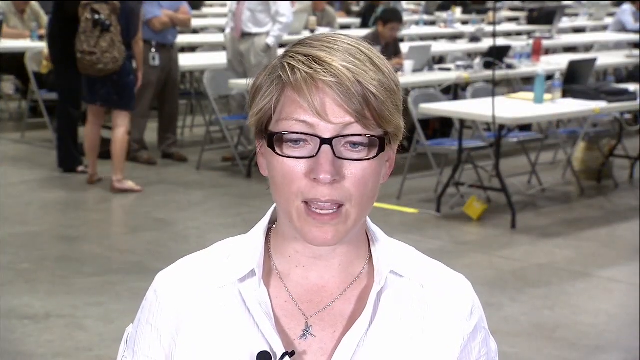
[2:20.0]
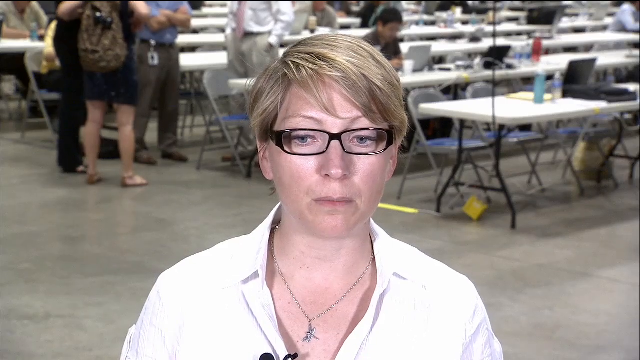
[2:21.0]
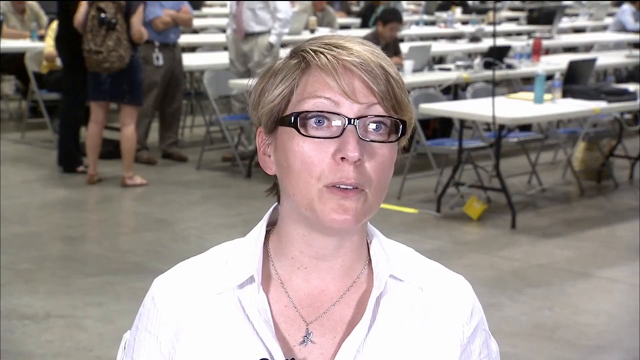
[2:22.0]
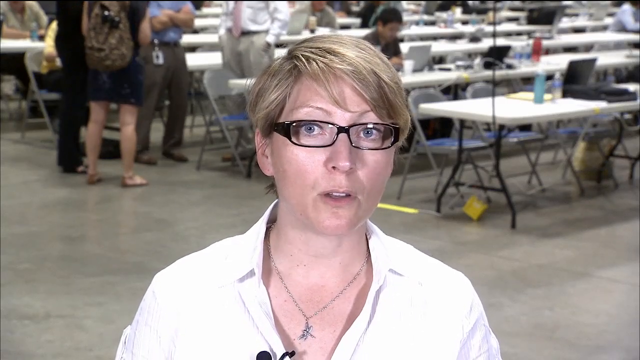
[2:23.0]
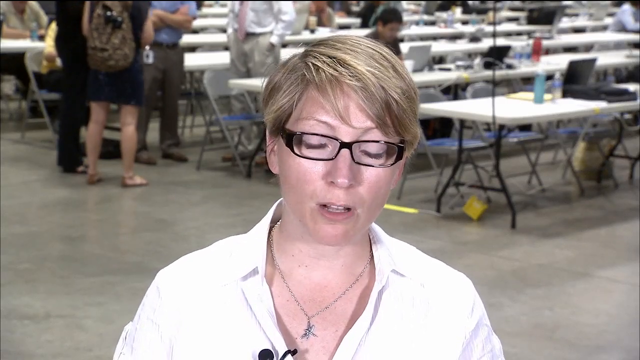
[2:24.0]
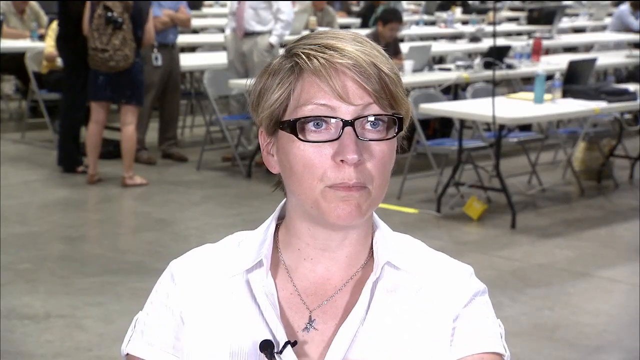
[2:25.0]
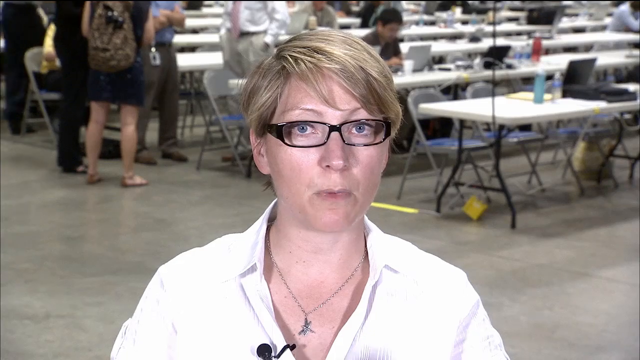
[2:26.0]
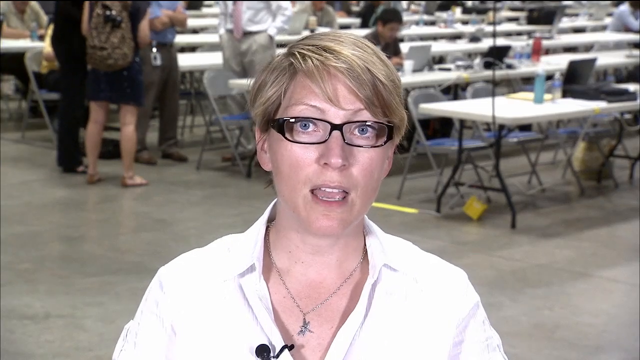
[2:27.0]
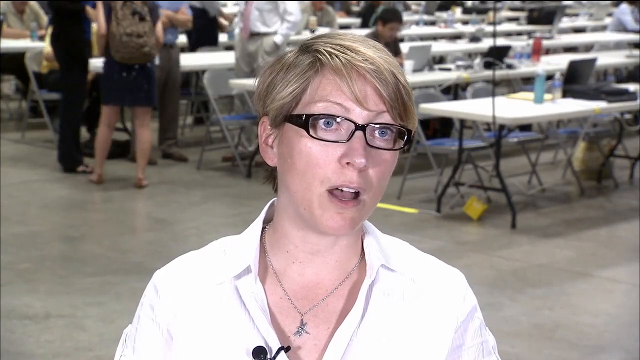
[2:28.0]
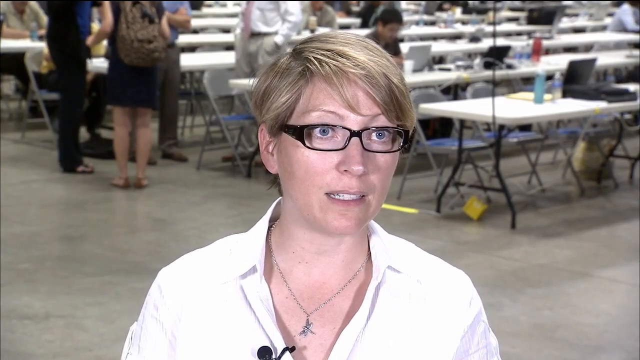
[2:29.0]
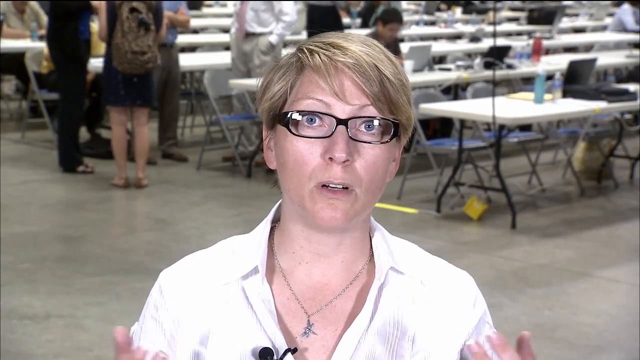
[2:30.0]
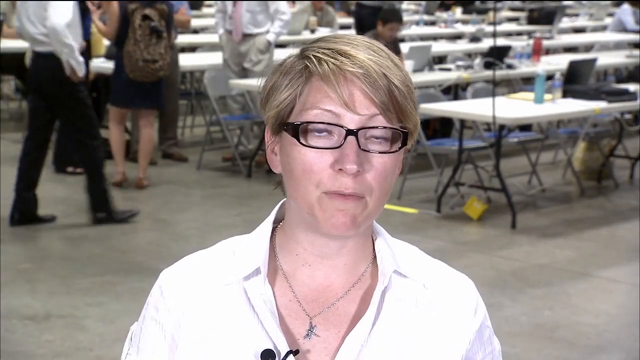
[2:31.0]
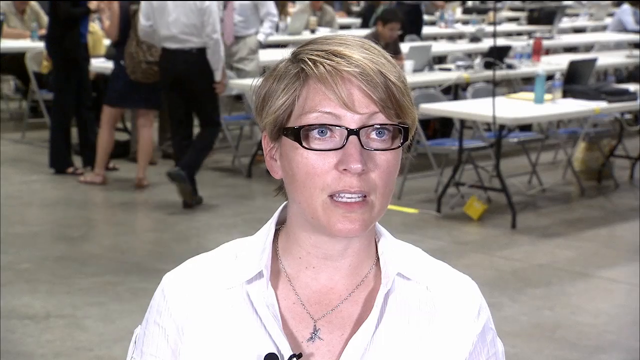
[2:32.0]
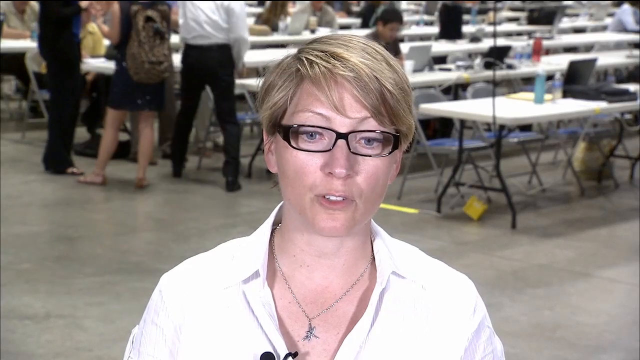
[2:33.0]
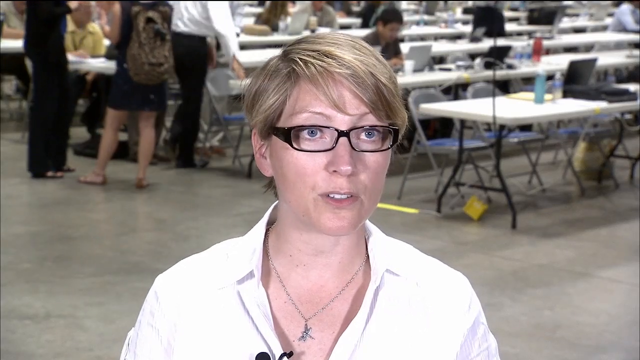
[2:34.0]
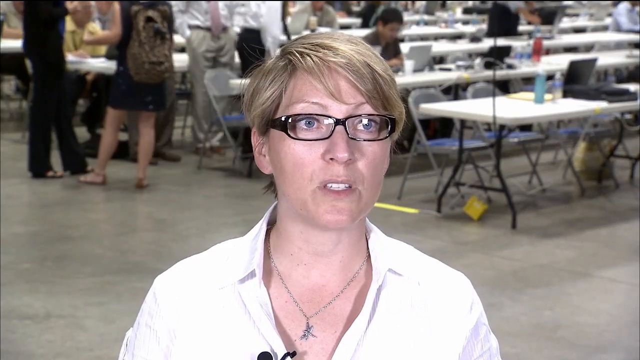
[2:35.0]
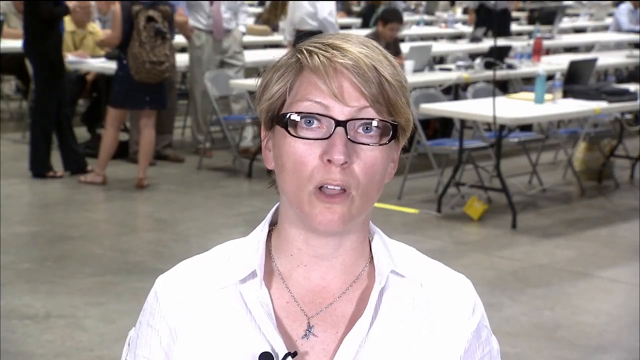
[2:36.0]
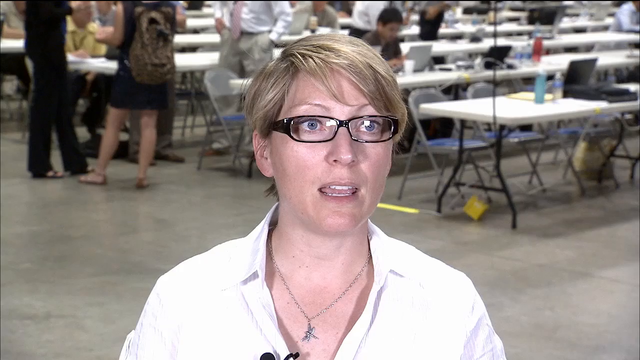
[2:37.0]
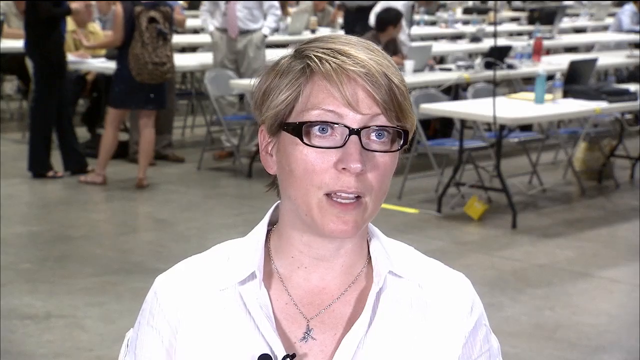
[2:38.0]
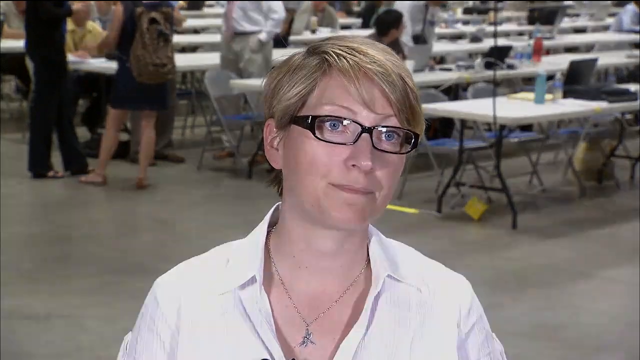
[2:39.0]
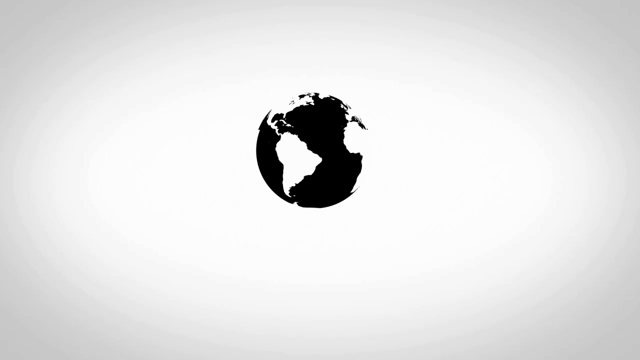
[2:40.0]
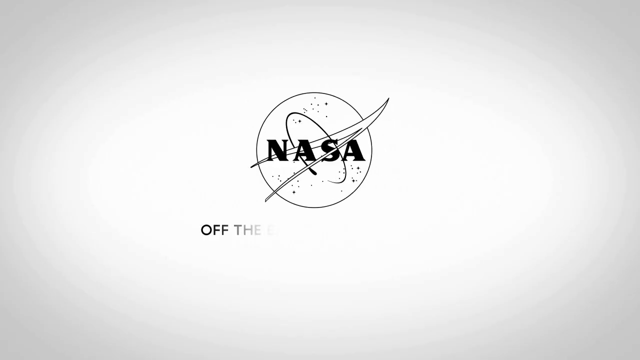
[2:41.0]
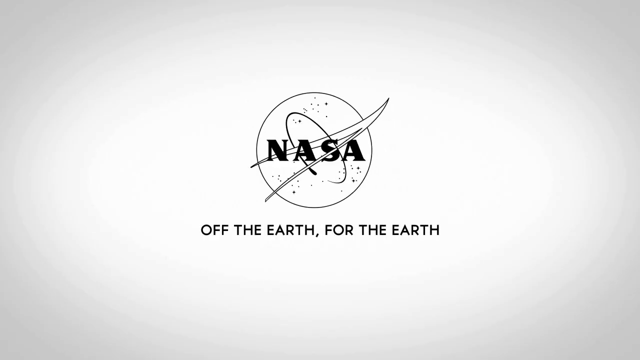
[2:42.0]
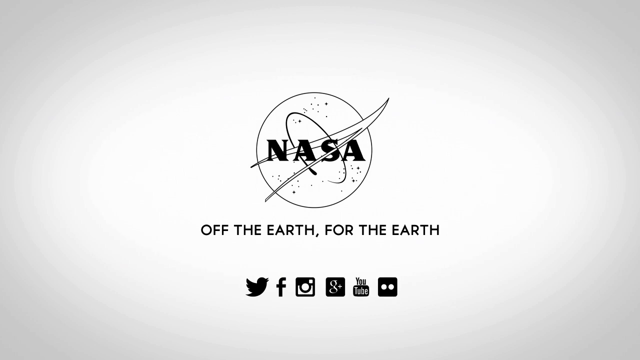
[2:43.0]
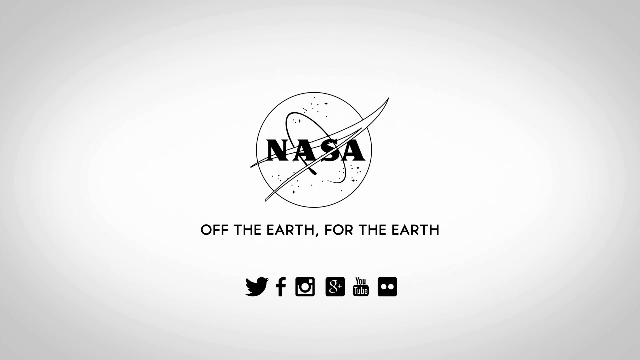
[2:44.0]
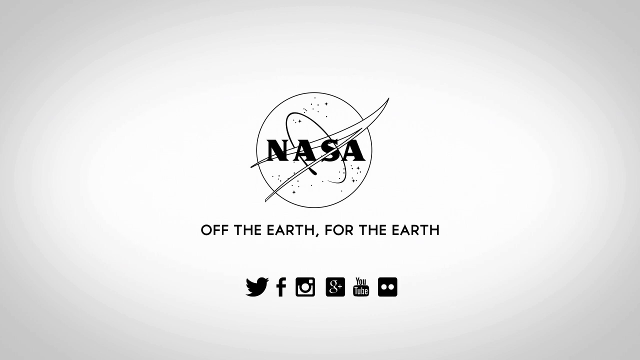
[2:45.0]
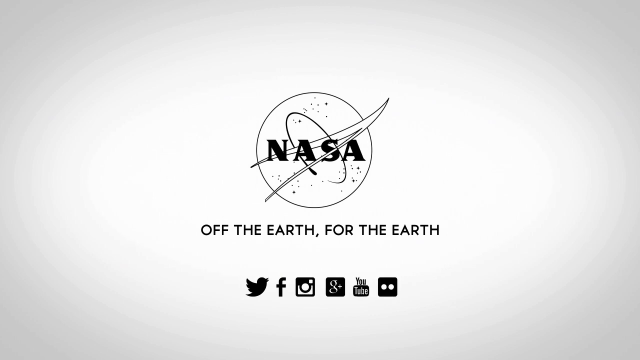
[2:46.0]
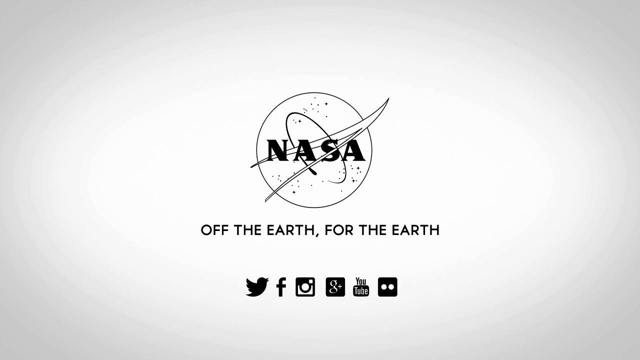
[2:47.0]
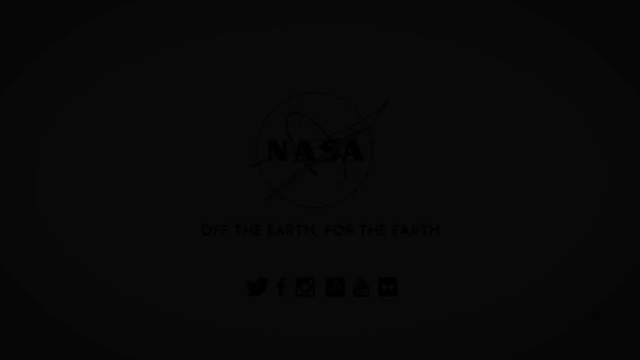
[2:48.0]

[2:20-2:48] A woman with short blonde hair and thick black-rimmed glasses wears a white buttoned-up collared shirt with the first couple of buttons unbuttoned, and a necklace with a charm is visible. Behind her, over her right shoulder, a person in a black skirt and black shirt with a tan backpack is seen only from behind. Standing to her left is a person in a black suit, visible only from the shoulders down. Behind her is a large room full of white tables lined up side by side, with gray fold-up chairs around them. Open laptops are on some of the tables, and a couple of people sit at these tables looking at the laptops. The screen then turns white, with a circle in the middle containing "NASA" in black, and underneath, in black, "off the earth for the earth."